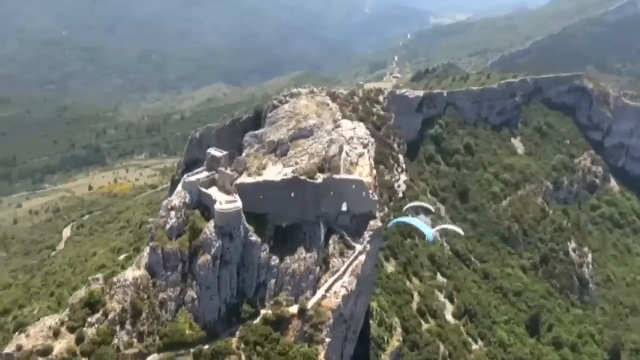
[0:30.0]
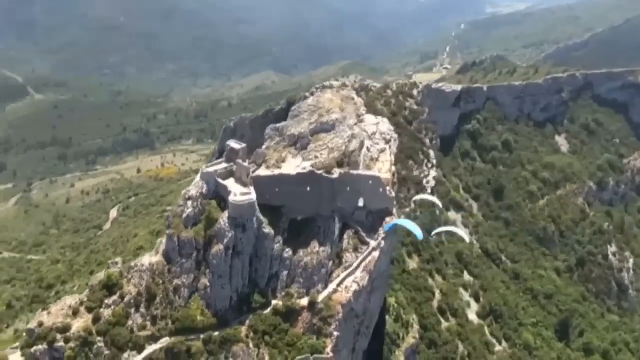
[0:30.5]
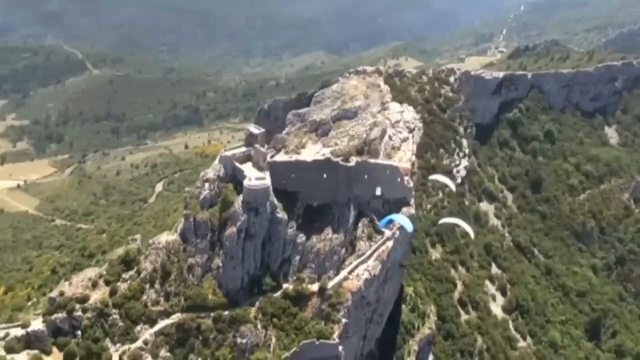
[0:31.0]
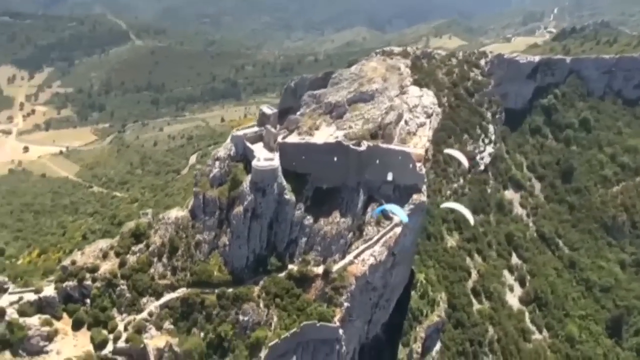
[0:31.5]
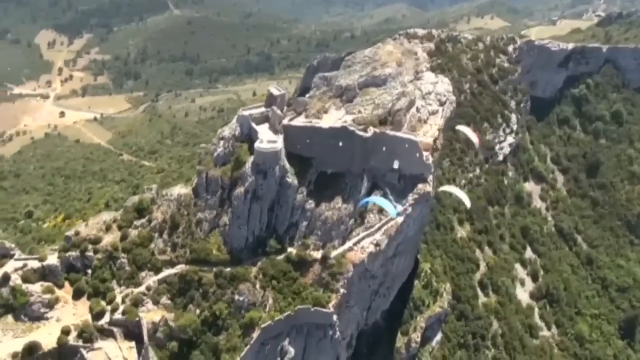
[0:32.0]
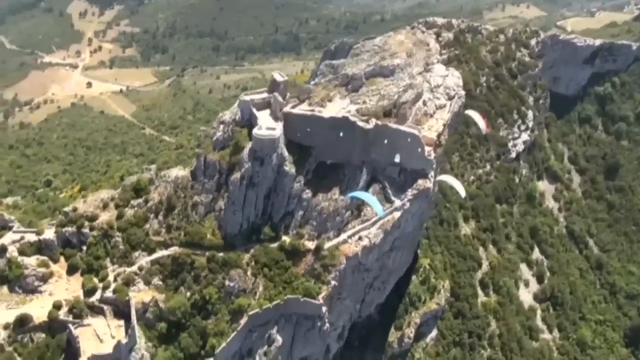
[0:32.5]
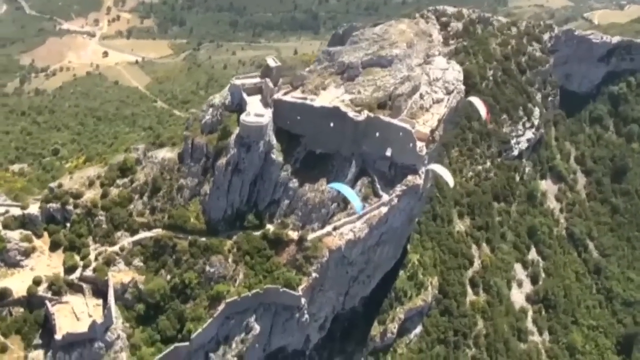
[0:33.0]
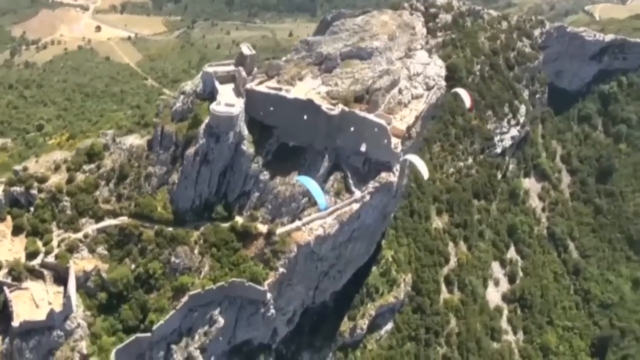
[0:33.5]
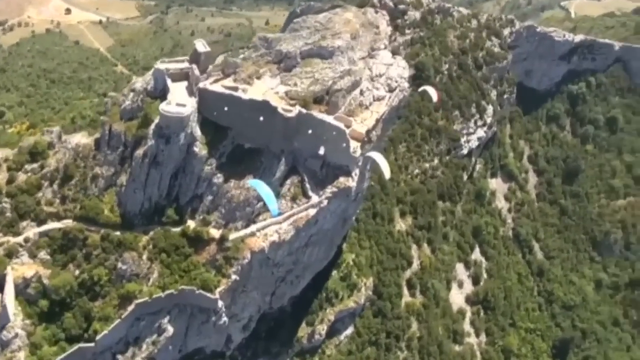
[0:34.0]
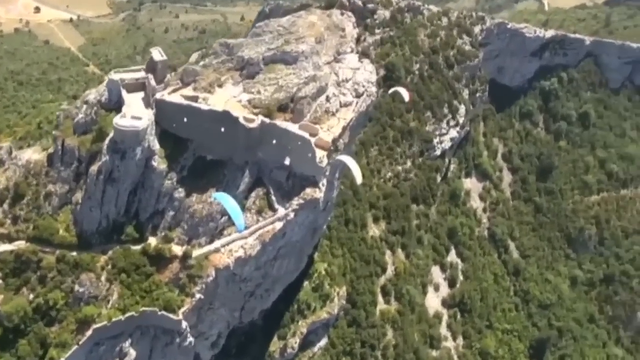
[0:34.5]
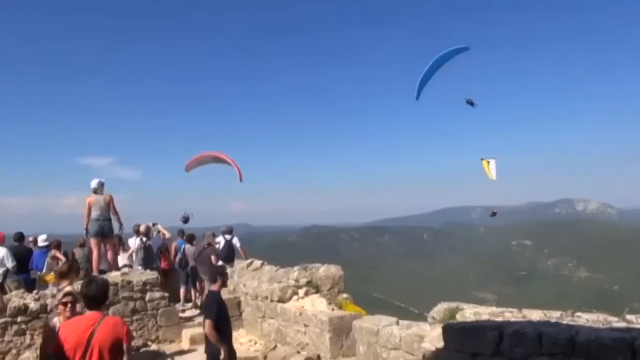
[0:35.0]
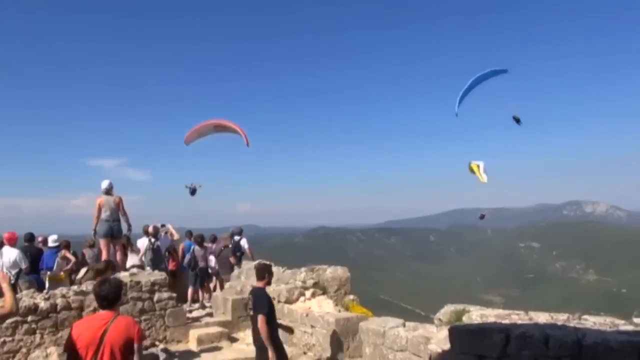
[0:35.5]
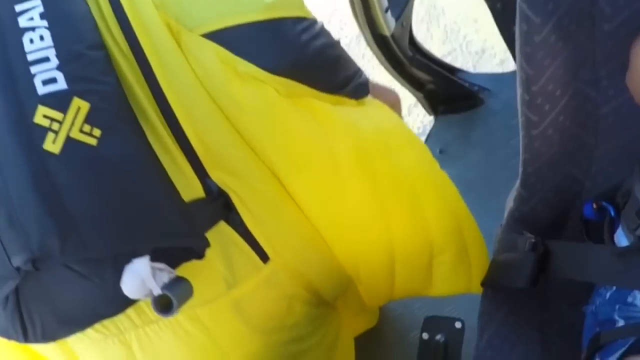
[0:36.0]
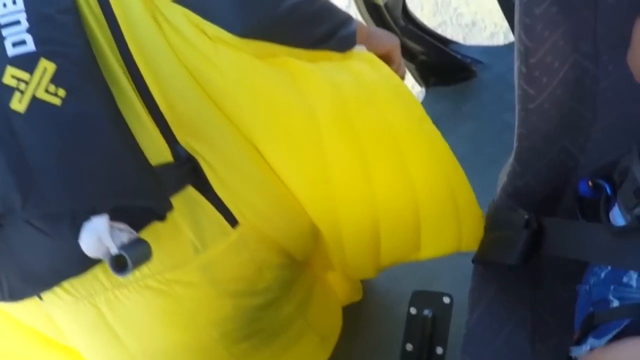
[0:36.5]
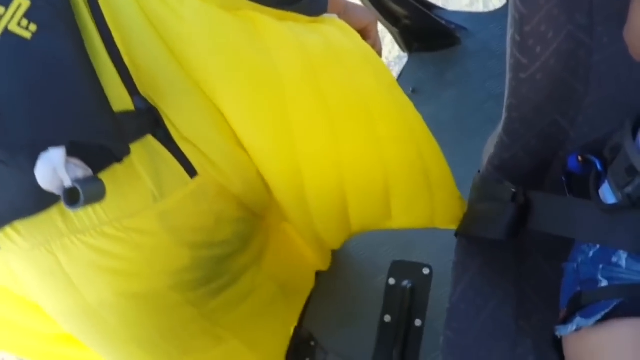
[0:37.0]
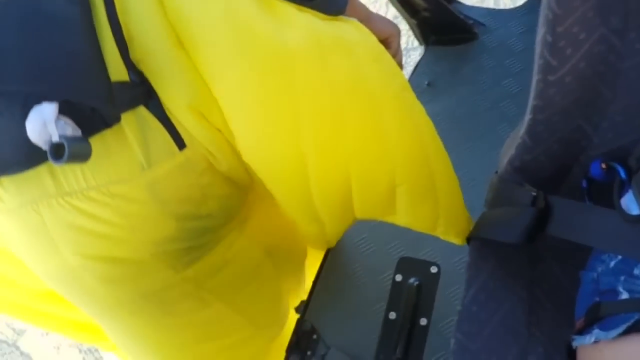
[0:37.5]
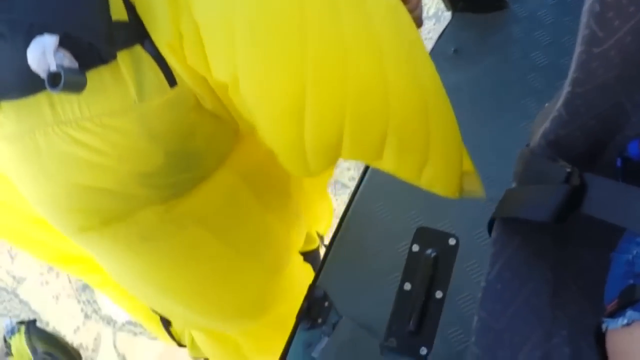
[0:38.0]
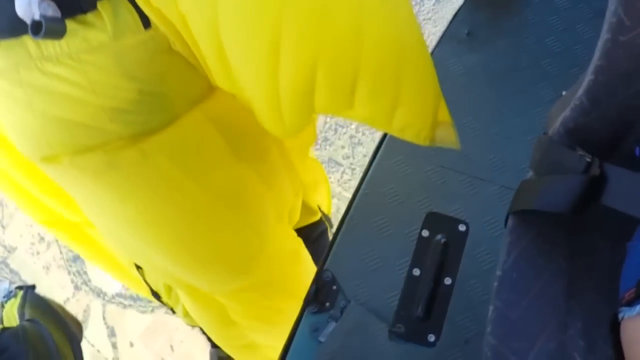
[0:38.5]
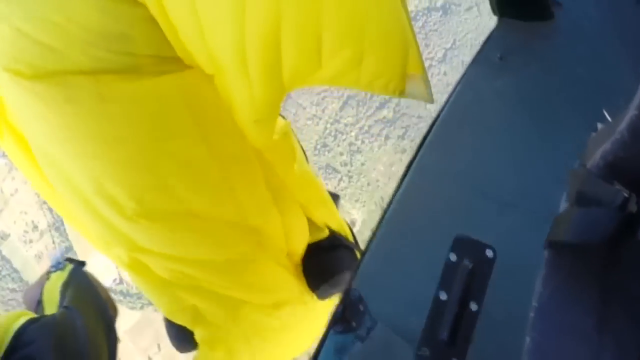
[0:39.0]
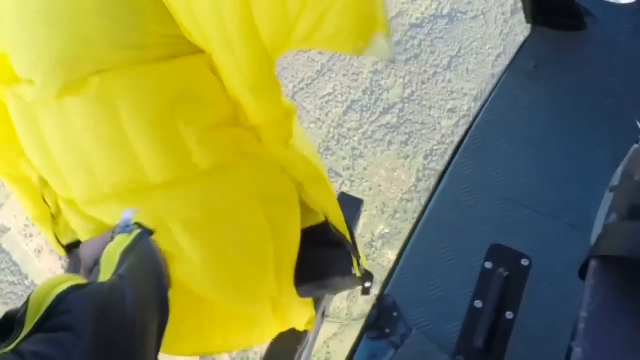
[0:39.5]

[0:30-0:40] A big rock structure is right in the middle, with little windows and walls built into its side, and trees and hills all around it. Down to the right of the rock structure are three paragliders: the top of one is blue and two are white. They kind of float off to the right side; one stays down while another goes up to the right. A group of people stands on rocks on the right side, coming about a third of the way over, with a red paraglider in front of them on the left and a blue one over to the right. Then there is a close-up of one of the suits where the arms and legs spread out to let the wearer kind of float down. Yellow takes up most of the left side of the screen as he steps off a piece of metal.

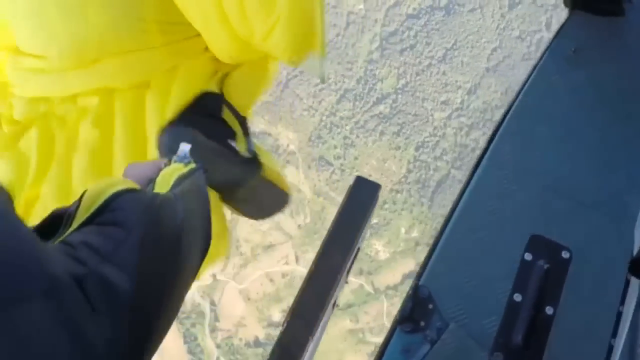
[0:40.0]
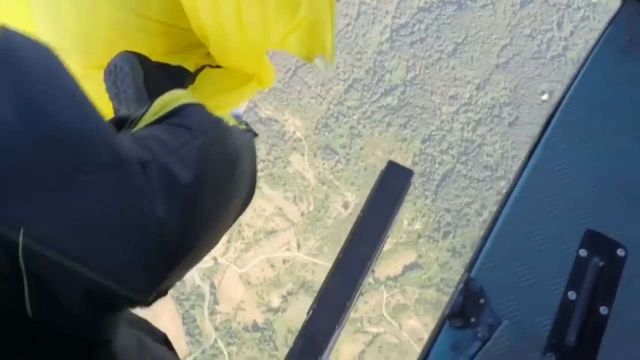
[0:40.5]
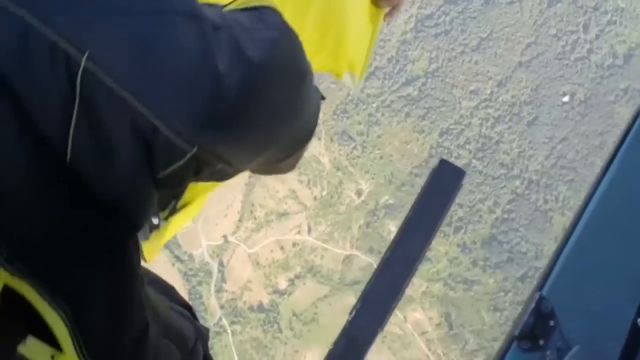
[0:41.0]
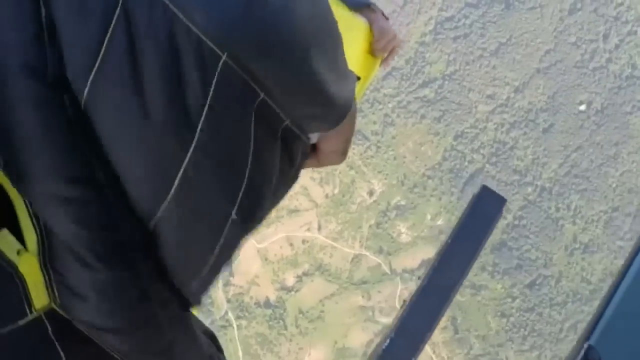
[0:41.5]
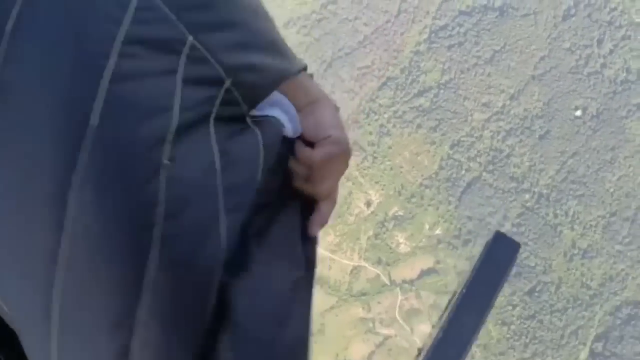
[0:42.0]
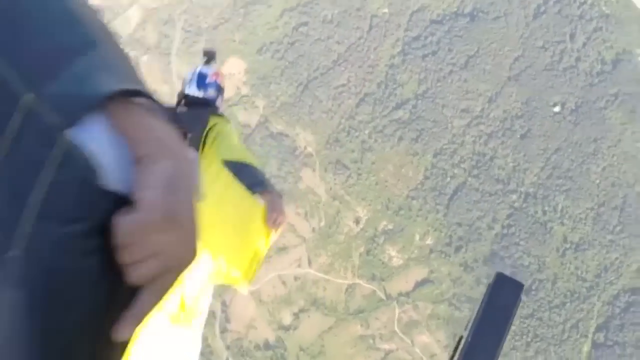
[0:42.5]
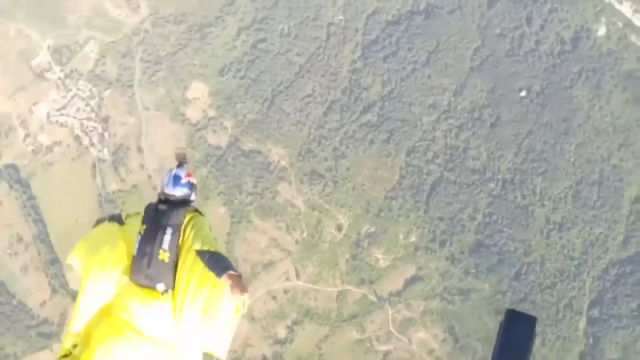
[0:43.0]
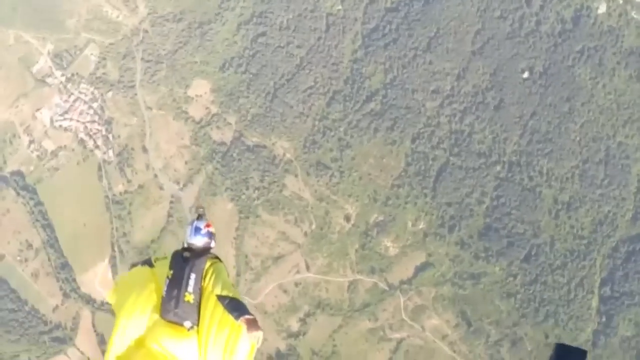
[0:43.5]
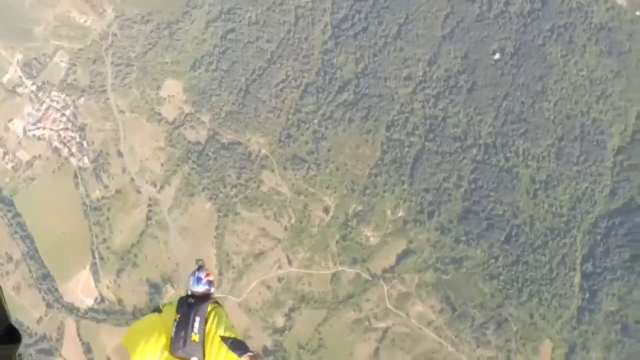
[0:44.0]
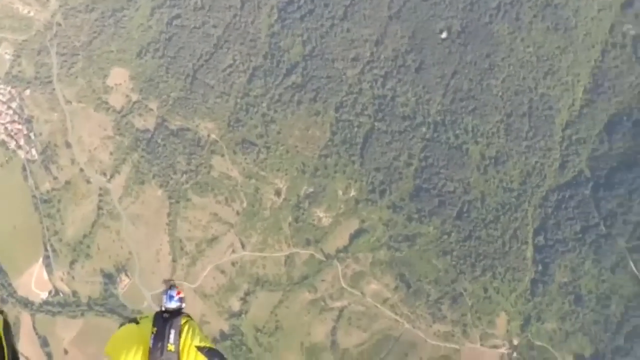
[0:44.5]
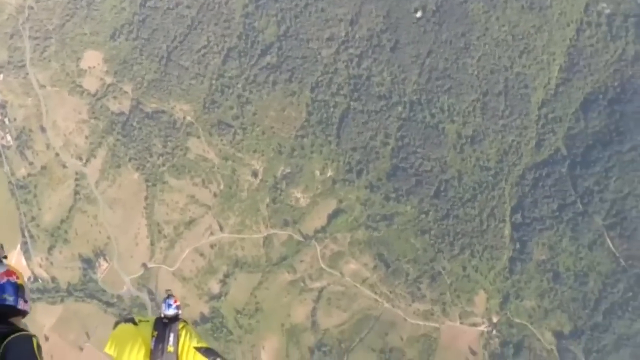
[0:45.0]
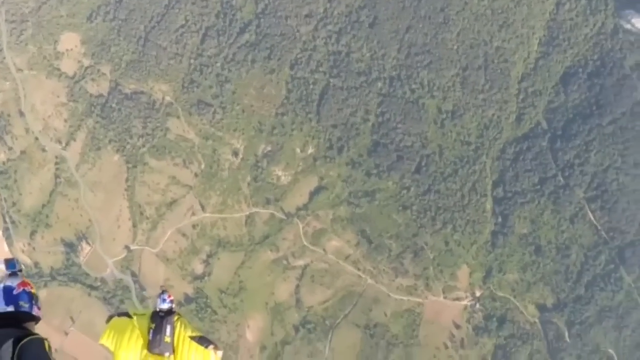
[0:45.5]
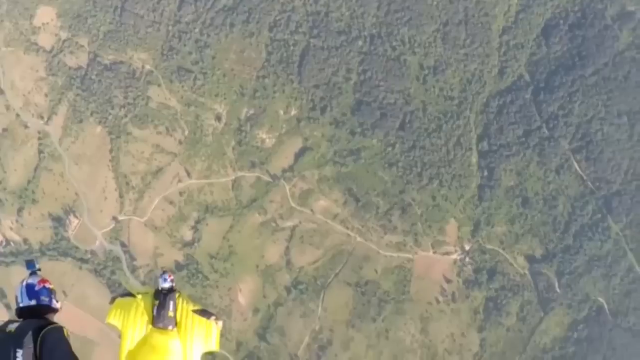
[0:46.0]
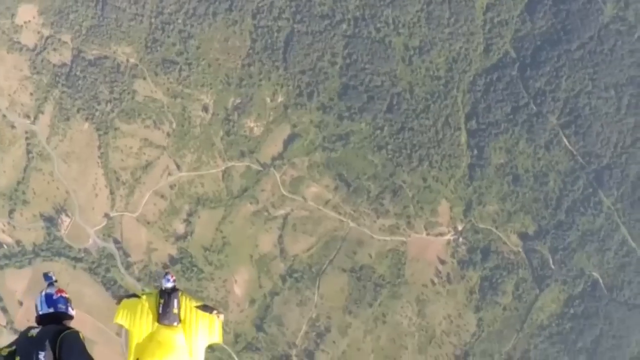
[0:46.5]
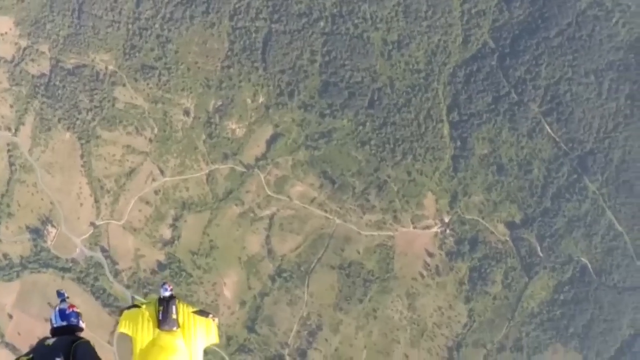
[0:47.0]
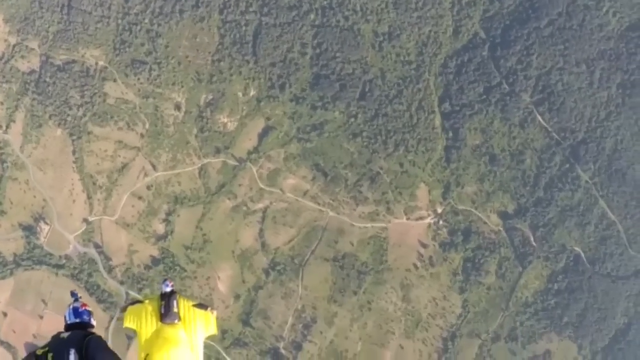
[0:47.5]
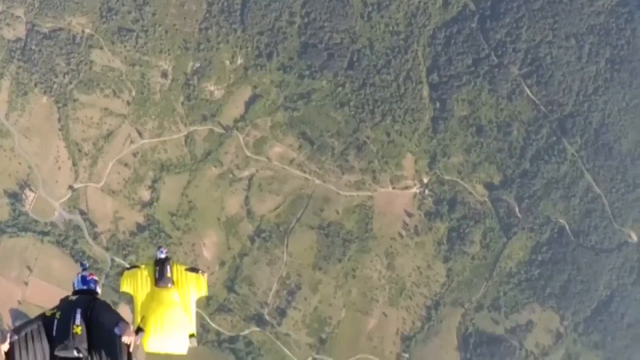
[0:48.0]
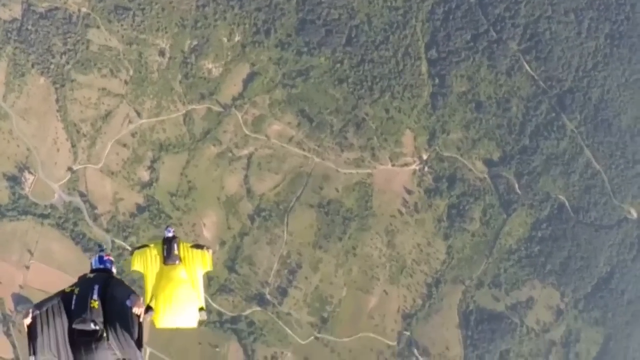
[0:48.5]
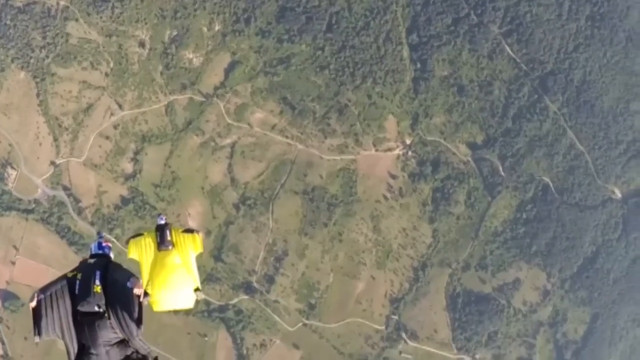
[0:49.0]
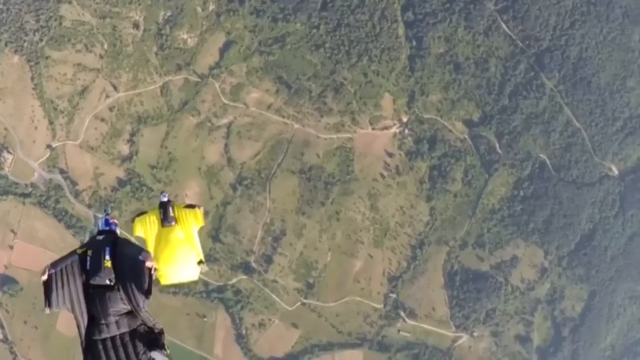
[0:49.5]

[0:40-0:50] A man steps off the side of an airplane leg to jump; the black leg comes in toward the bottom right. Below, the earth is so far down it almost looks like dirt, though it is probably trees. He takes up the left half of the screen, and his hand comes down the side, gripping the part of the suit that flaps out like wings. There is a red one and another one in front, and a black one still on the airplane. The one in black jumps out behind him, and they free fall with arms and legs spread out wide. He has black shoes with yellow. Both wear helmets with cameras on top; the helmets are in Red Bull colors with a Red Bull logo on the side.